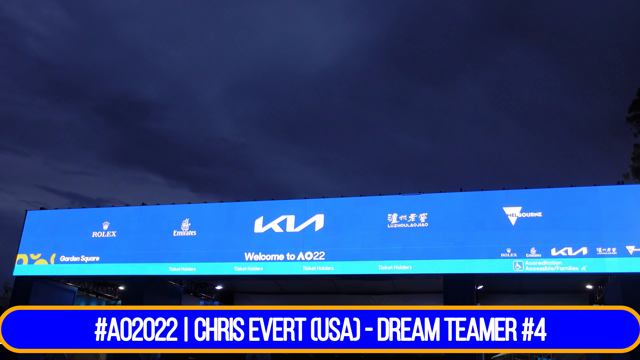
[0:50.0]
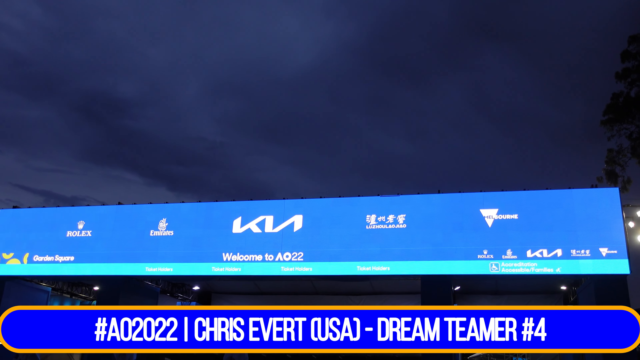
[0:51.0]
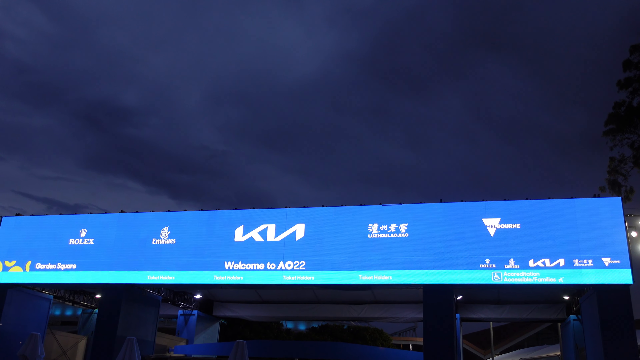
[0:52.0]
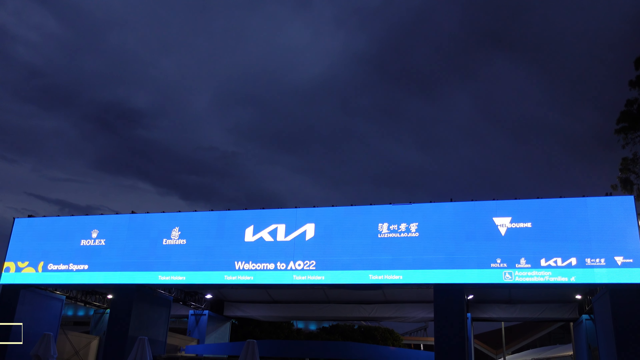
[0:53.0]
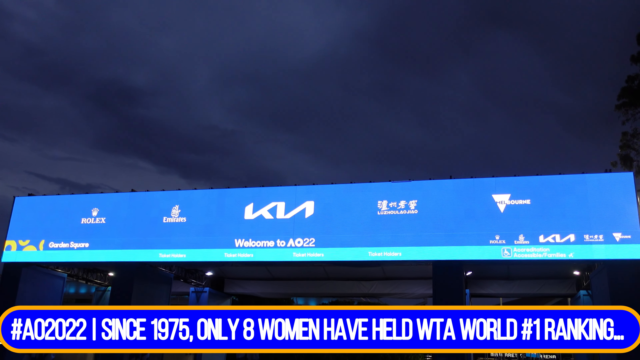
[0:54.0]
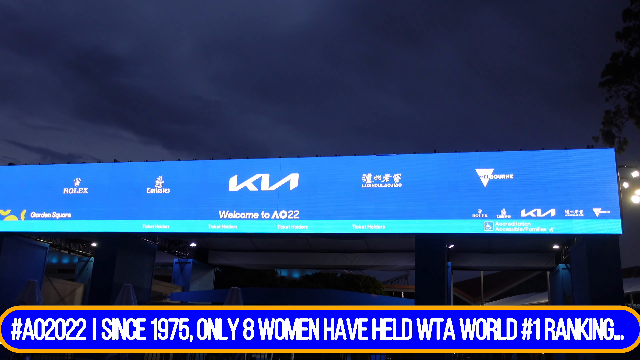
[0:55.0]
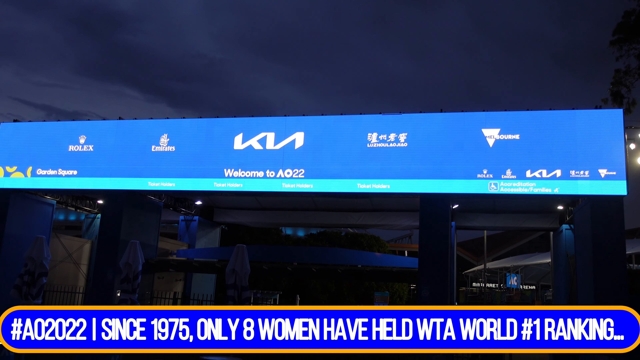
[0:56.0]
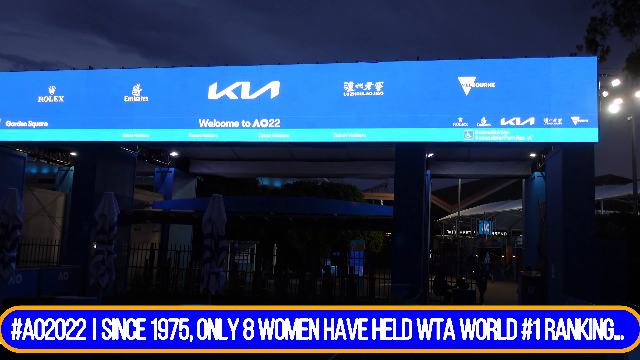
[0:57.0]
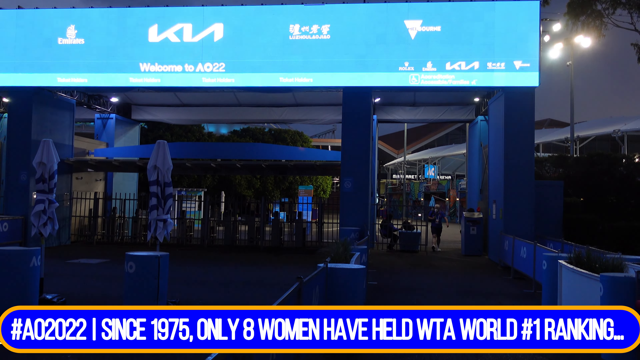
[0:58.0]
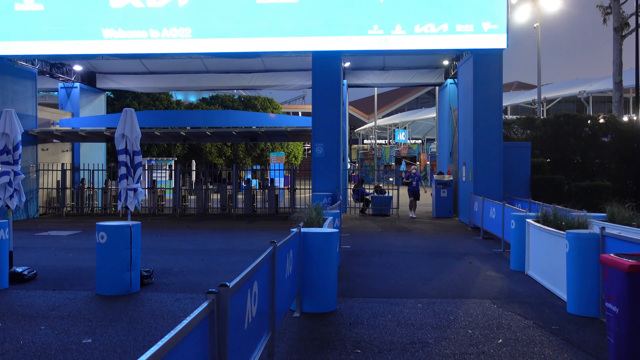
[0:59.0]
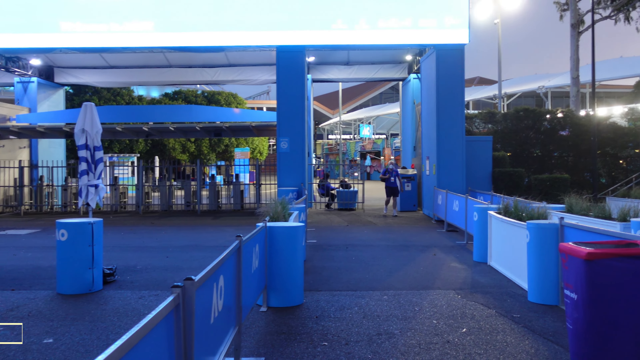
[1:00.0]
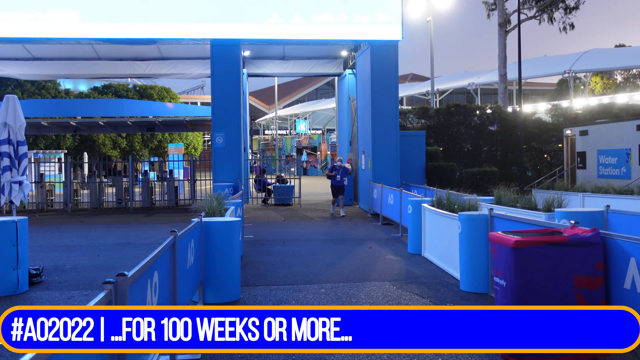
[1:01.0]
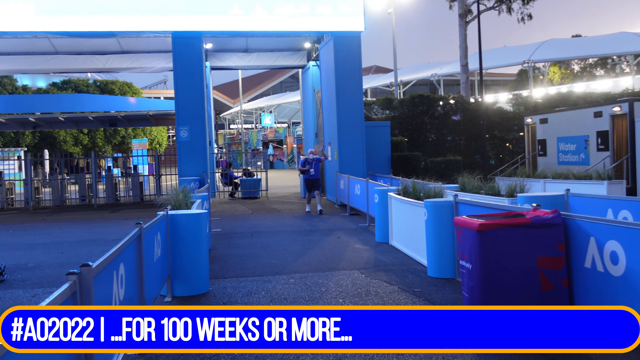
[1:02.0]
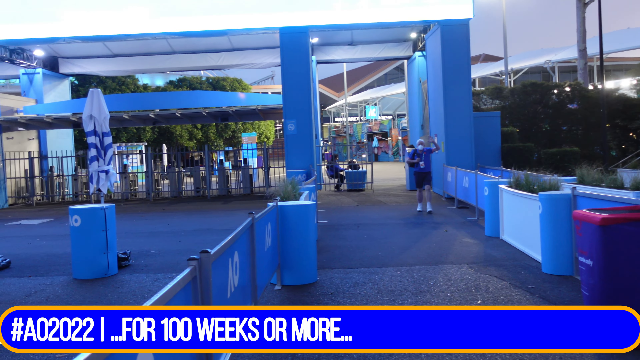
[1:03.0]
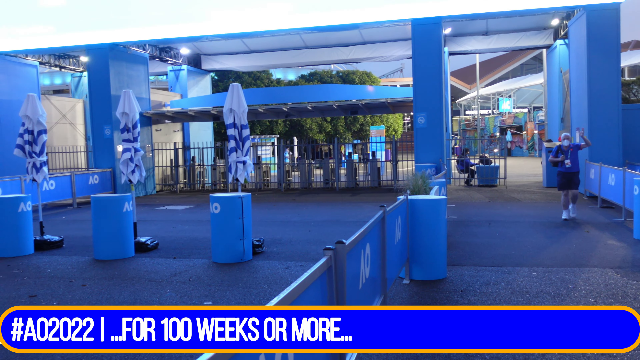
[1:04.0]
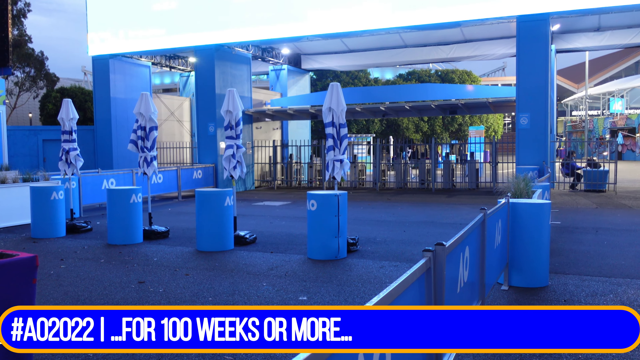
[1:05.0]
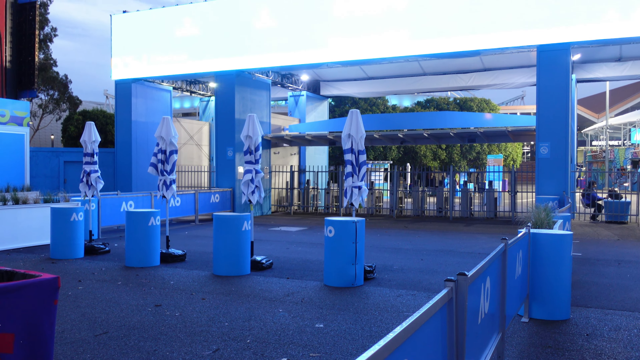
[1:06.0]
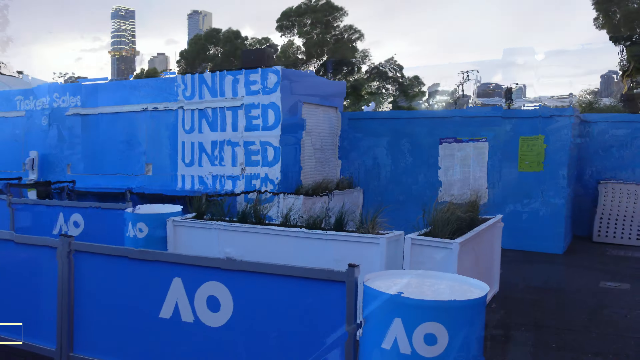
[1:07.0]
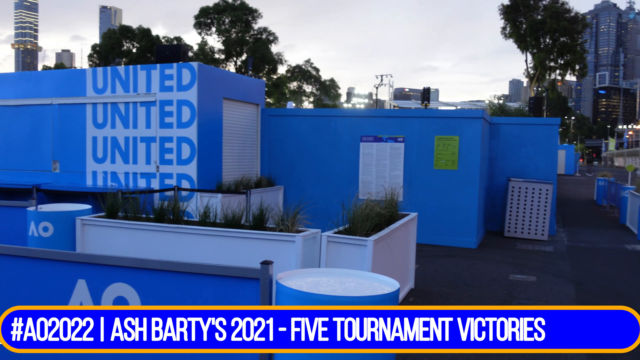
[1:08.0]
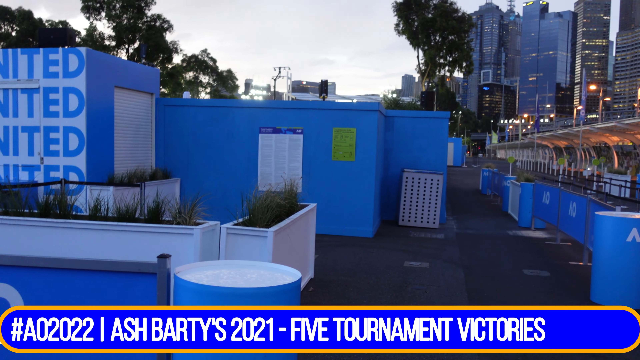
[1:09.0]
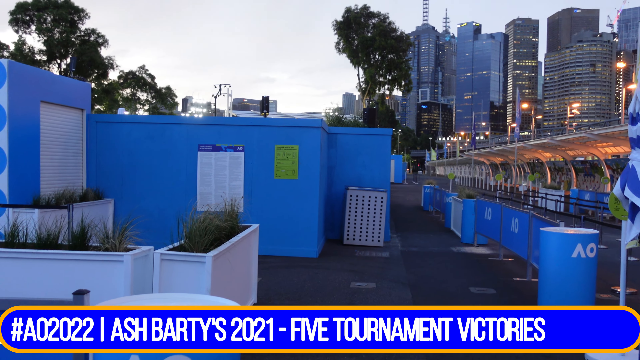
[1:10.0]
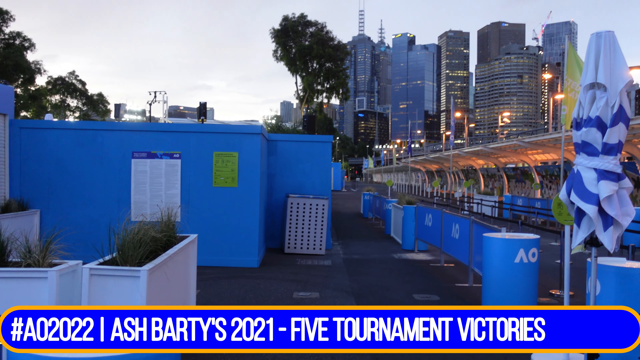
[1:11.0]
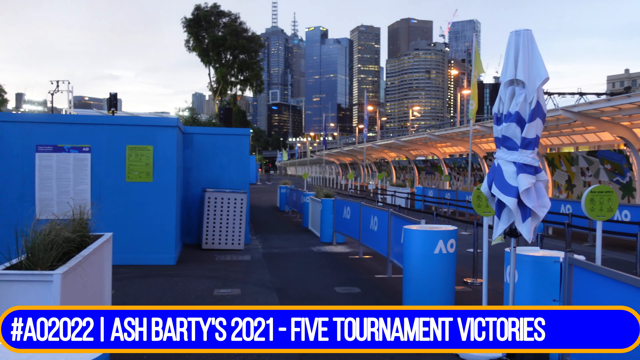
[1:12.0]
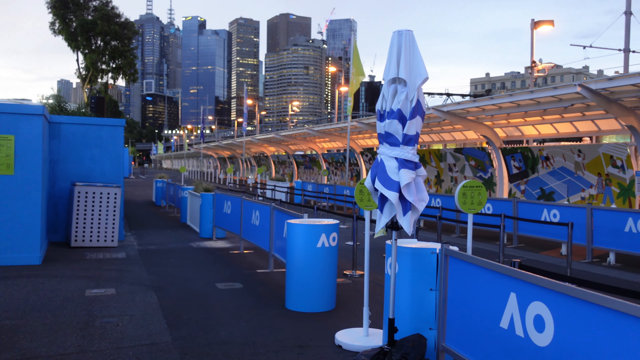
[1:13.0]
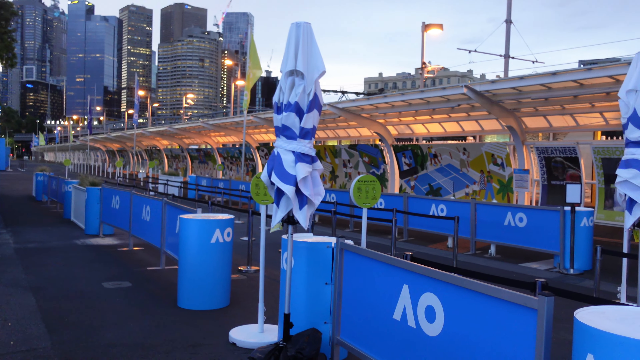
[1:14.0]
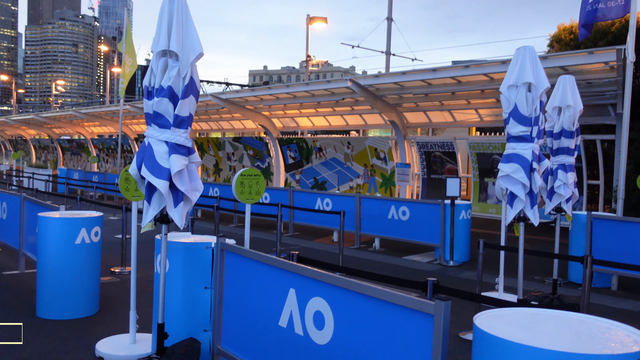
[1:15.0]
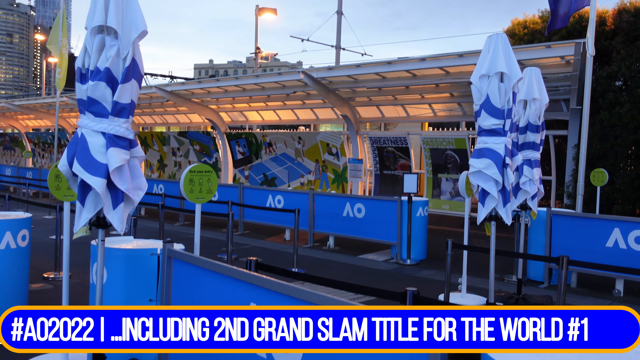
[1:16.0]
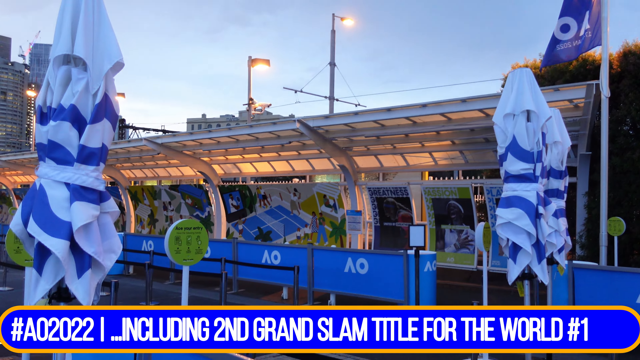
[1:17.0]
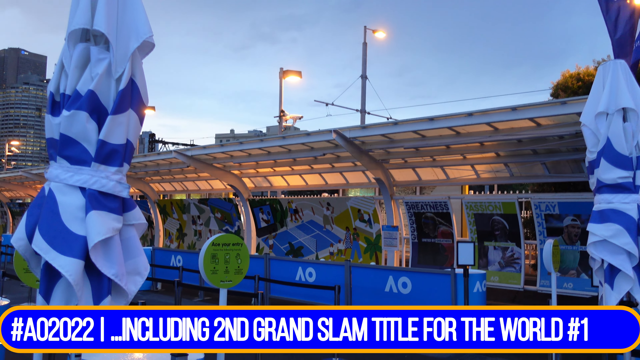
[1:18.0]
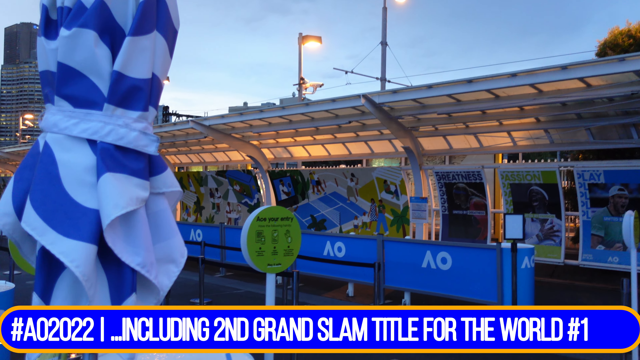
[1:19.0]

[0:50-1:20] The big screen on top of the Australian Open check-in area shows that the location is the Garden Square, and lists sponsors including Rolex, Emirates, Kia and Melbourne. A banner in the video reads "Australia Open 2022, Chris Evert, USA, dream teamer number four". The camera is still pointed at the screen and the sky. It looks like night time until the brightness adjusts and it looks more like evening. A man in a blue shirt, wearing a badge and a mask, walks towards the camera and waves at it. Another person is sitting at a counter near the check-in or entry area. The camera pans to the left-hand corner, showing around four or five umbrellas, and then other parts of the area: buildings in the background and a shade station like a roof. It looks like a setup where people can enter the event.